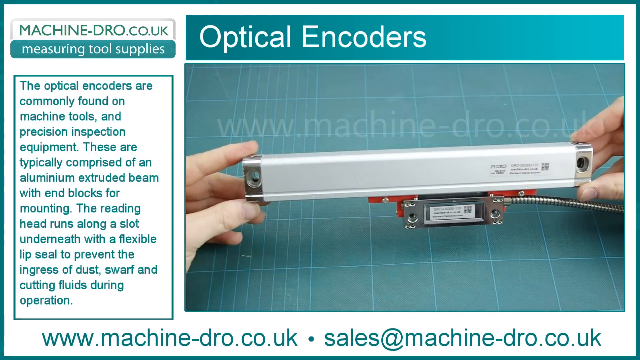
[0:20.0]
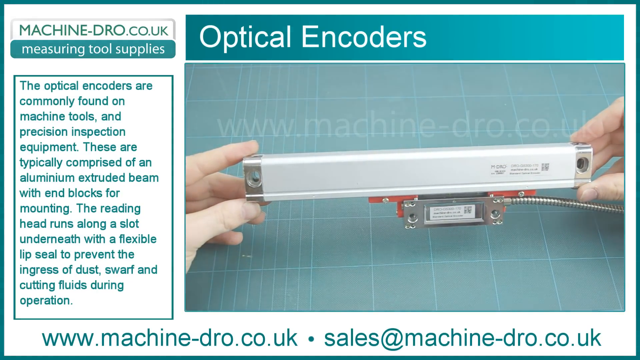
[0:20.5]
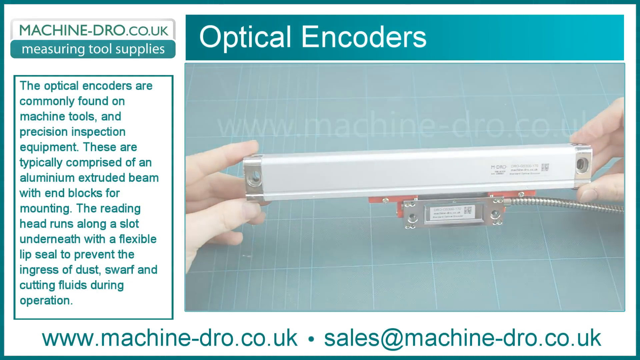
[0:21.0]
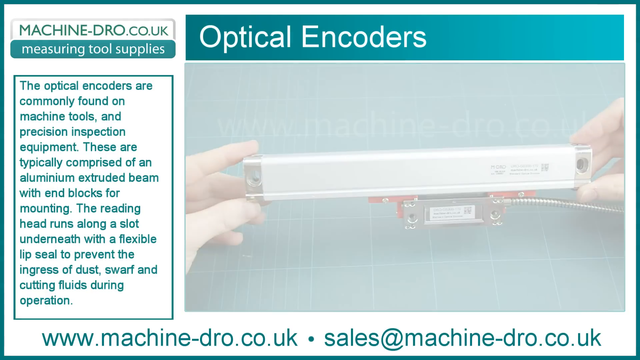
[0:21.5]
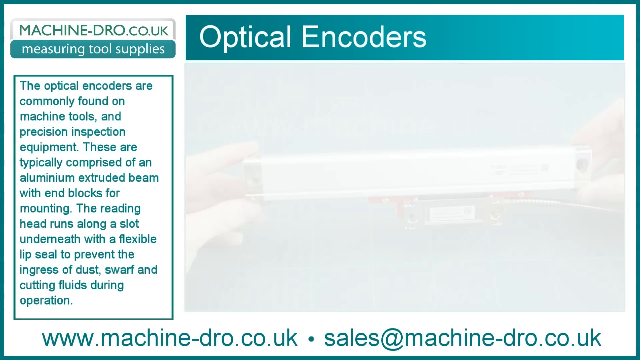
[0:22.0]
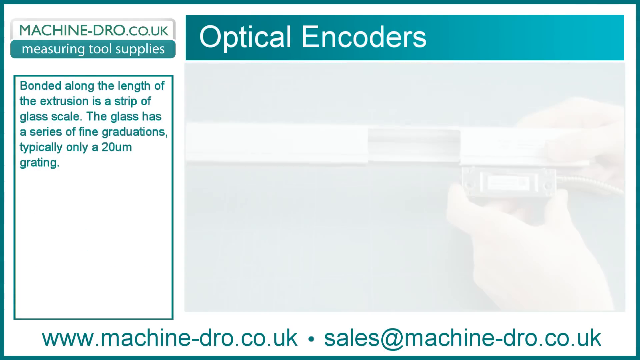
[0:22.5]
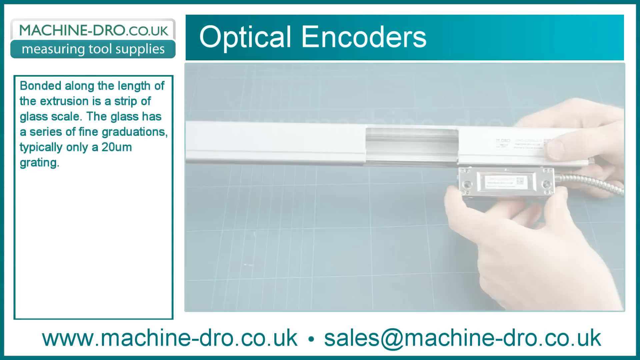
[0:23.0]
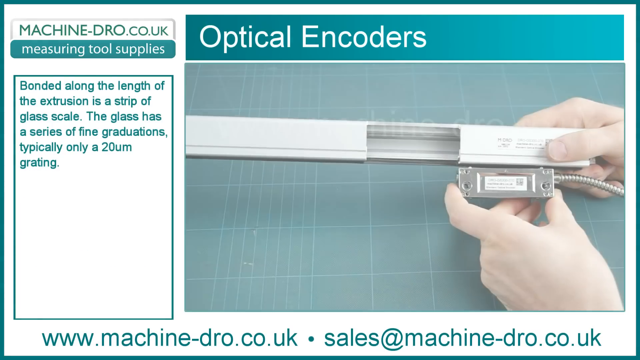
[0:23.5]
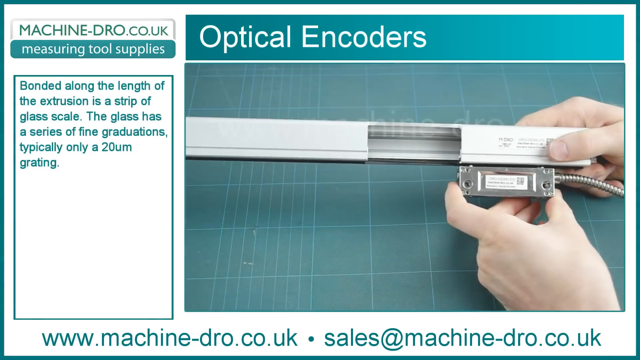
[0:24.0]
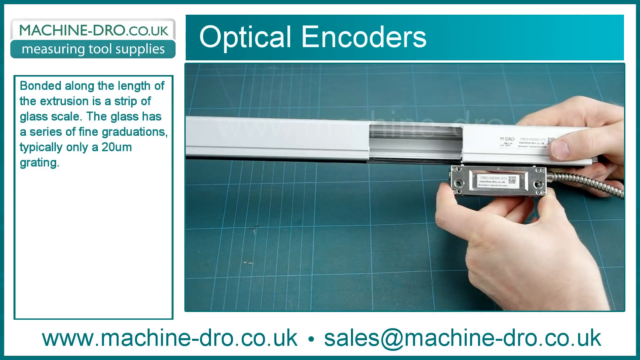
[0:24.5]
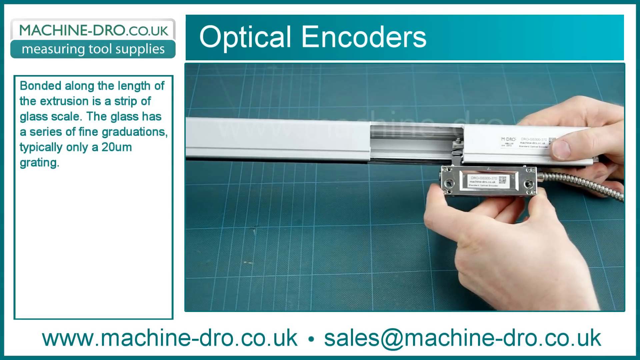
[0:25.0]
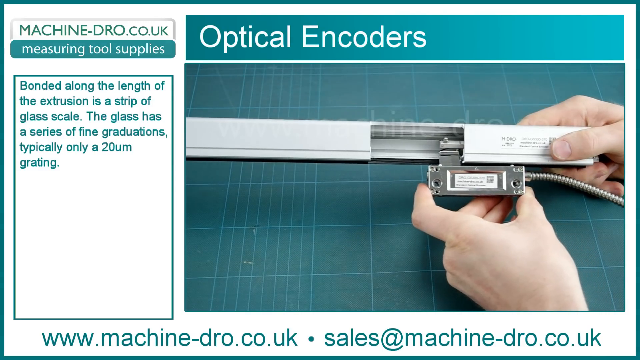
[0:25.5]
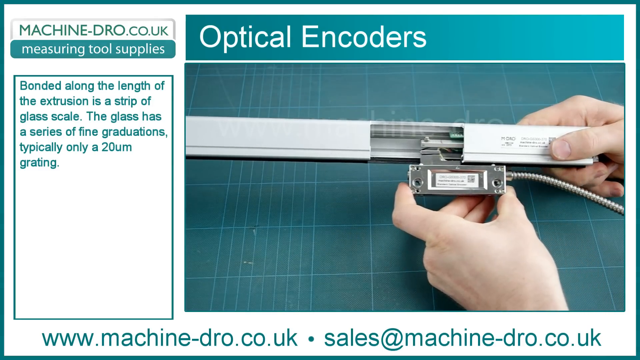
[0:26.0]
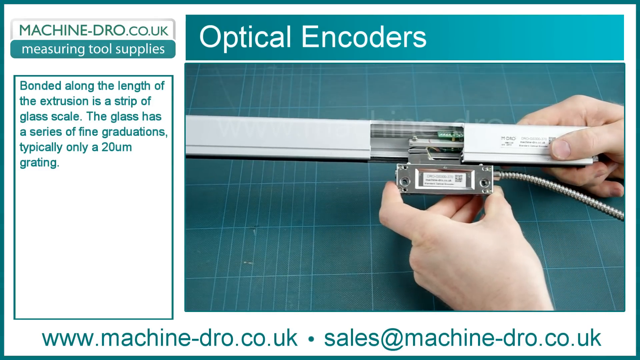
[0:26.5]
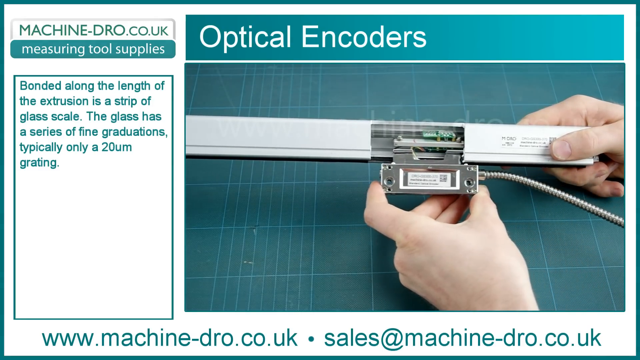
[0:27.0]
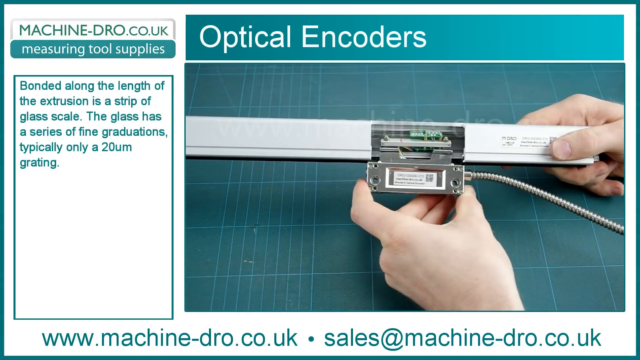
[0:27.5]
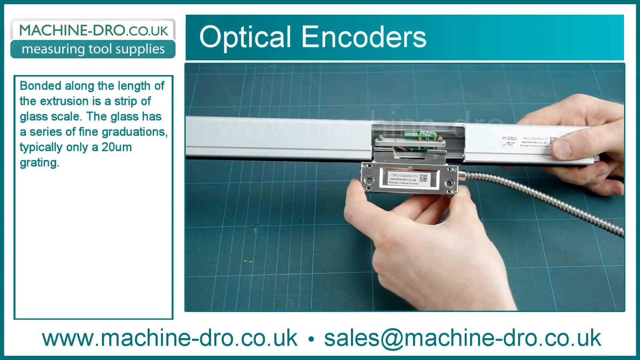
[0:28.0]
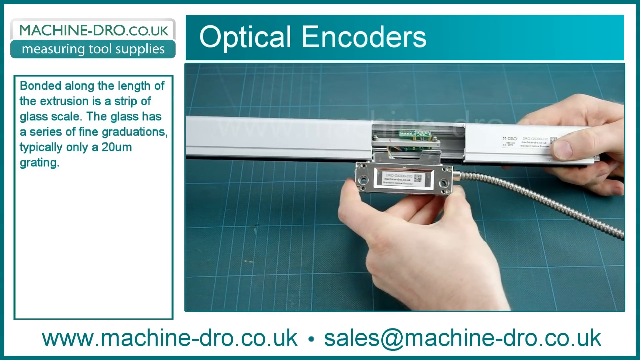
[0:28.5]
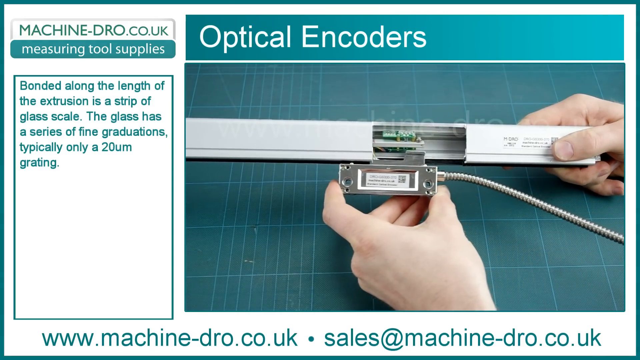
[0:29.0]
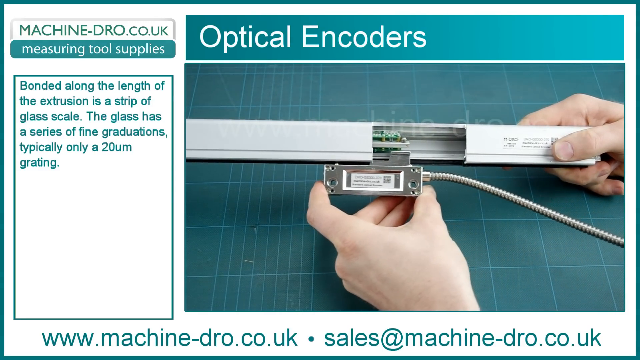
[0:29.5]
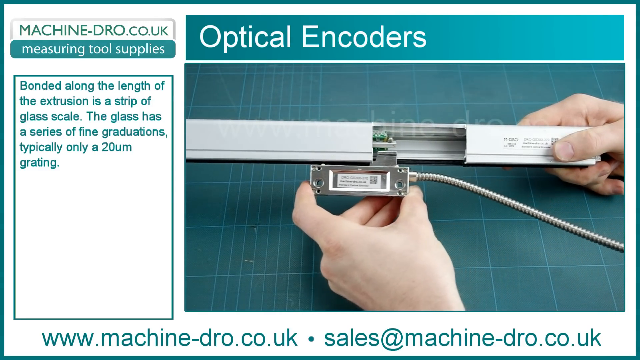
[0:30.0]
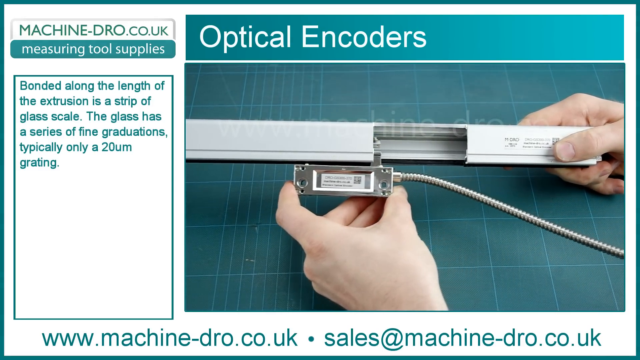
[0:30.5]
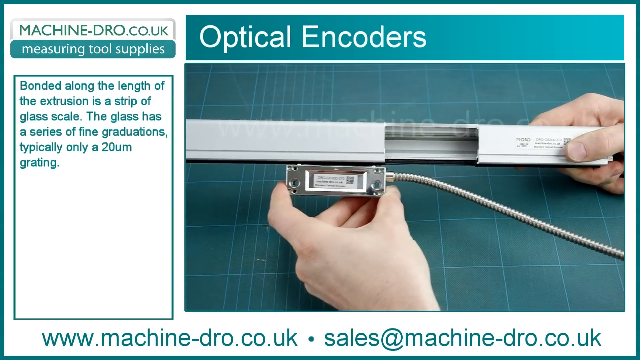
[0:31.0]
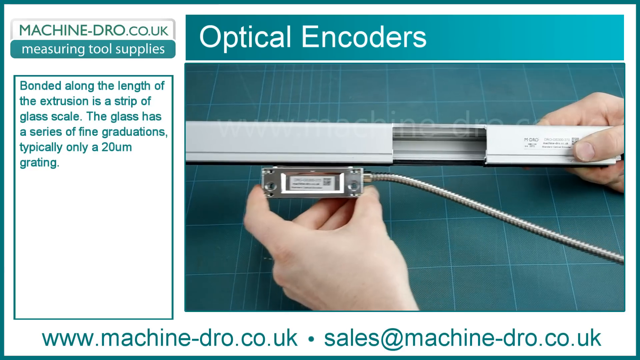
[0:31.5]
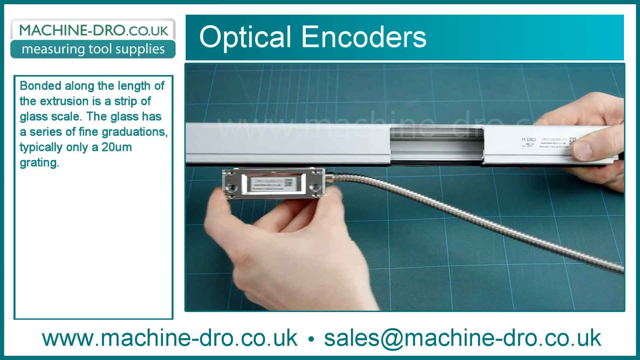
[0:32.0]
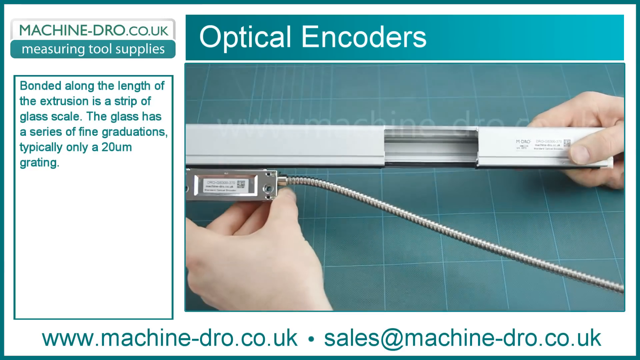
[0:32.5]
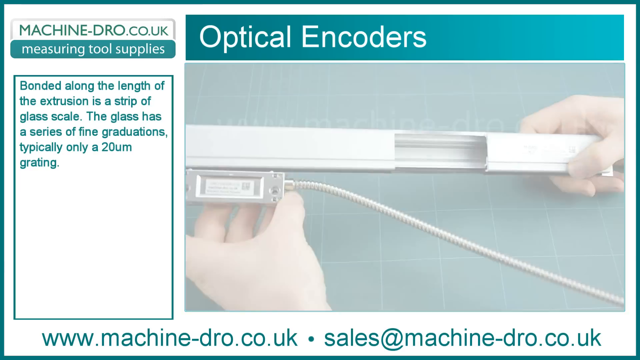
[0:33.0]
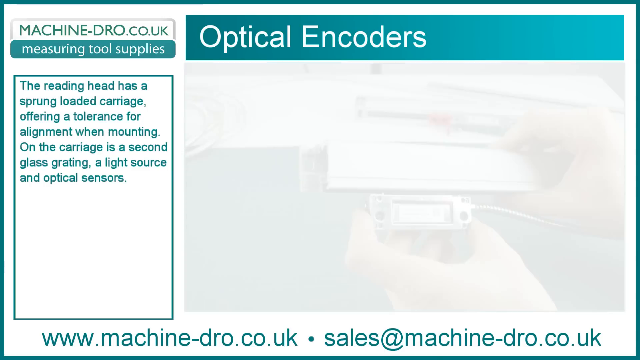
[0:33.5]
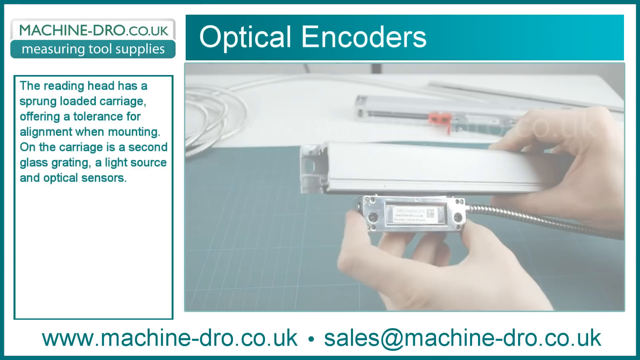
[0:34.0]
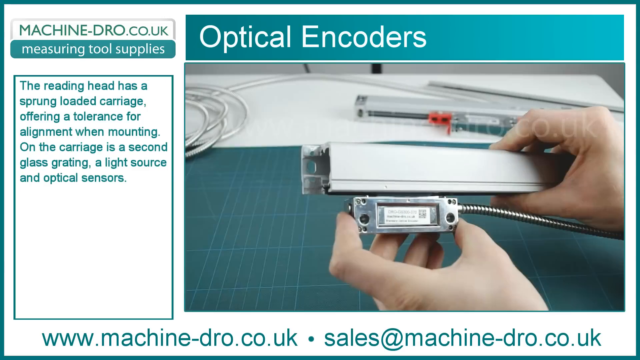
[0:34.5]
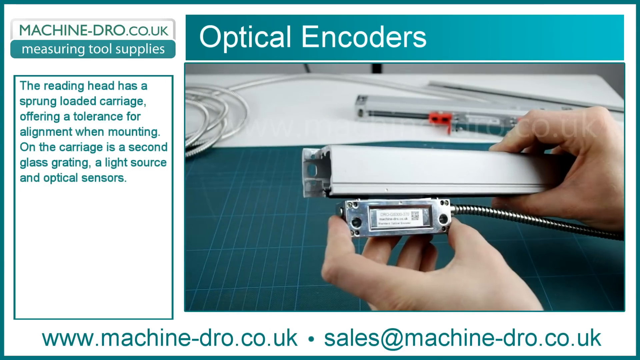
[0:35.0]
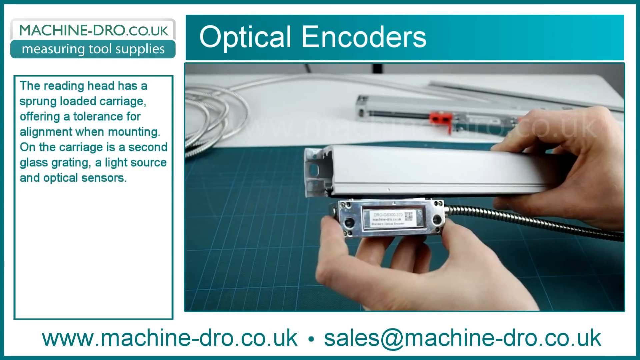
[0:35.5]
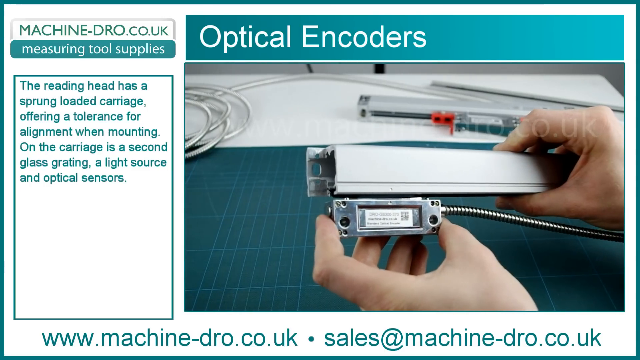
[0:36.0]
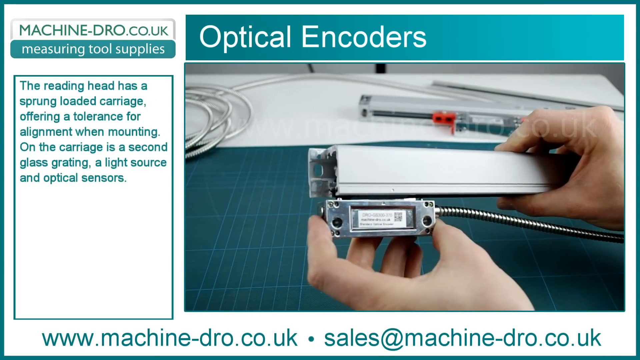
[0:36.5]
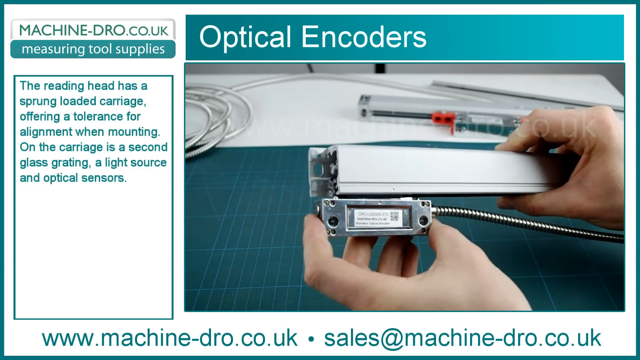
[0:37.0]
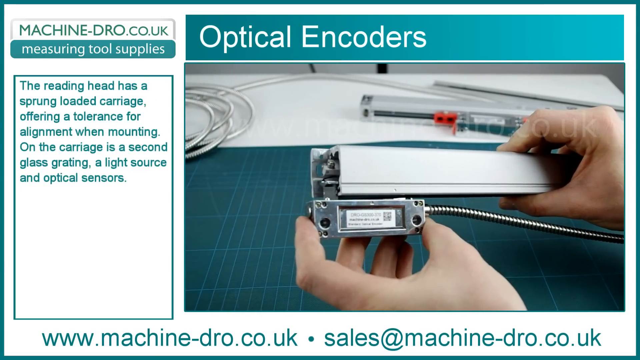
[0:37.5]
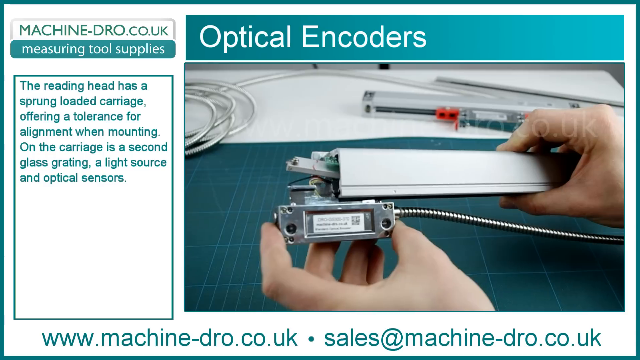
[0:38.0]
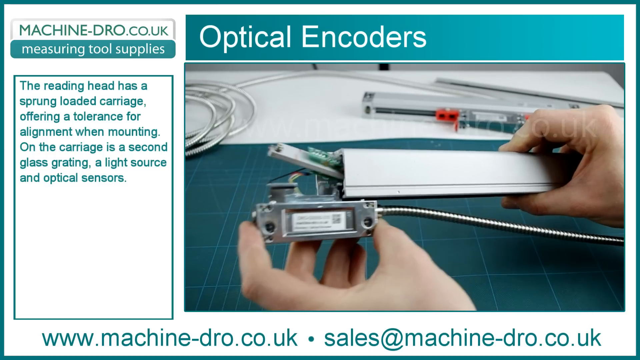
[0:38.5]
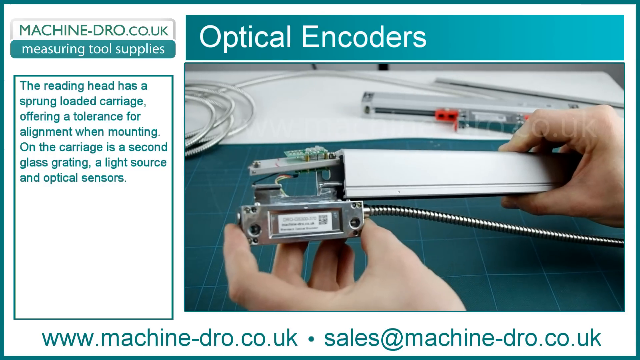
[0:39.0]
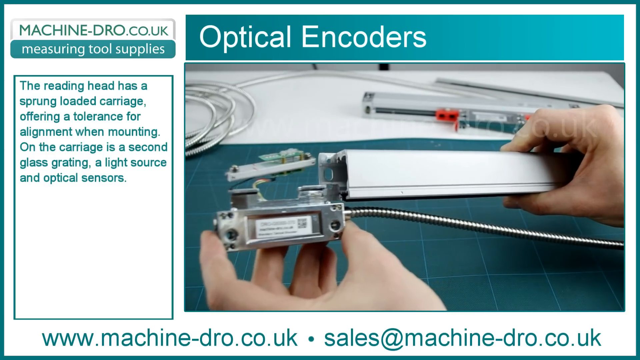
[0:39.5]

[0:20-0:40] The metal box slides along the bottom of the instrument. A thick wire with some grooves in it is attached to the metal box. White hands remove the metal box from the panel, sliding it to the right, and it goes out the left-hand side of the instrument. The piece slides through a window that is a cutout in the top of the device. Behind the device is a medical setting, with clear tubing rolled up behind it along with some other medical items. Text on the left talks about the reading head, mentions the glass grating and the optical sensors, and mentions how it can be mounted.